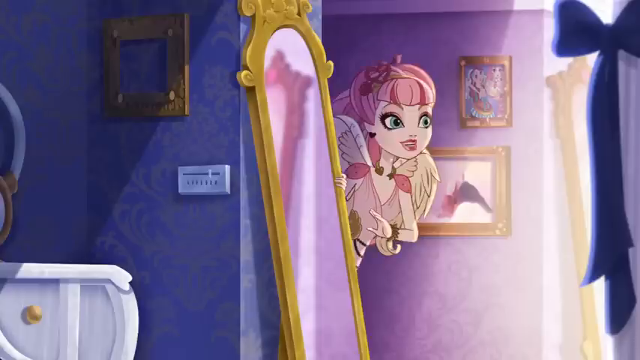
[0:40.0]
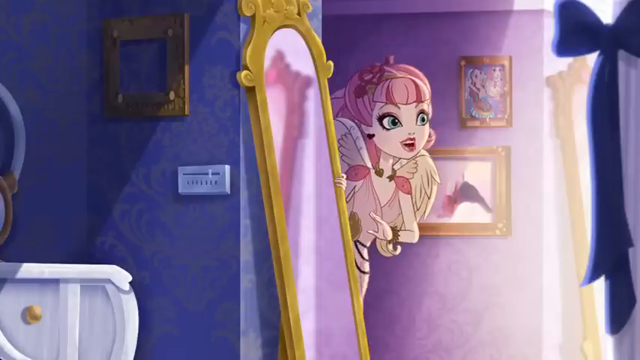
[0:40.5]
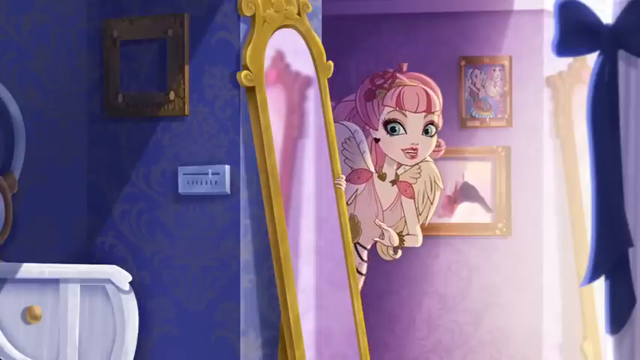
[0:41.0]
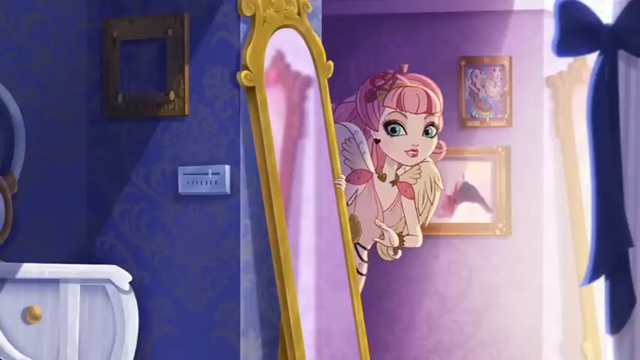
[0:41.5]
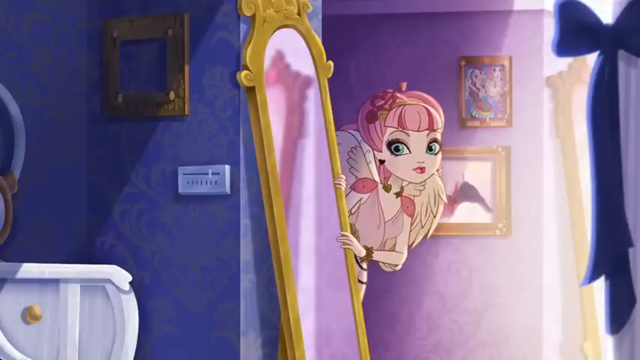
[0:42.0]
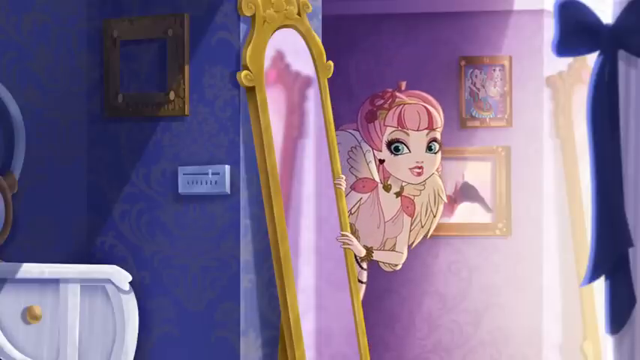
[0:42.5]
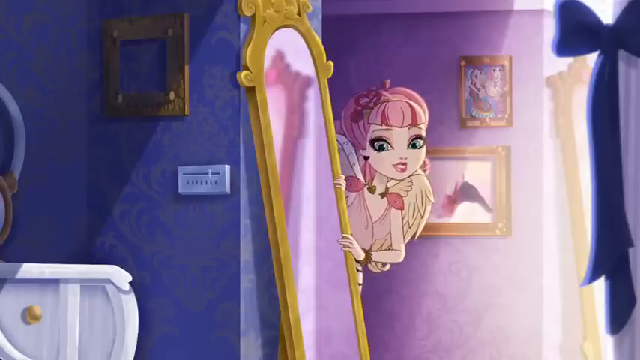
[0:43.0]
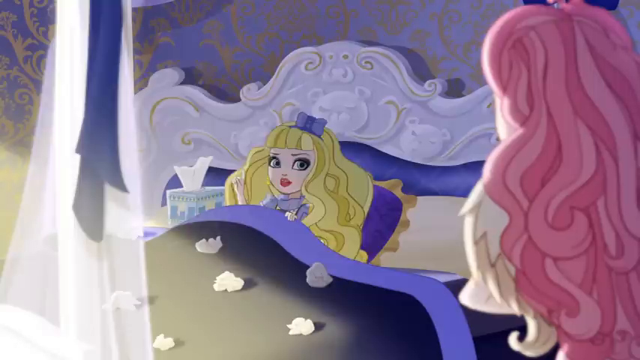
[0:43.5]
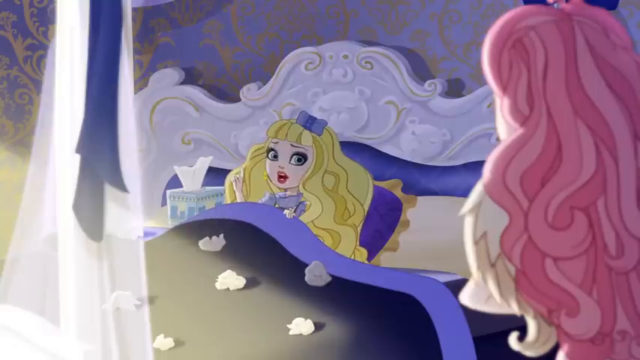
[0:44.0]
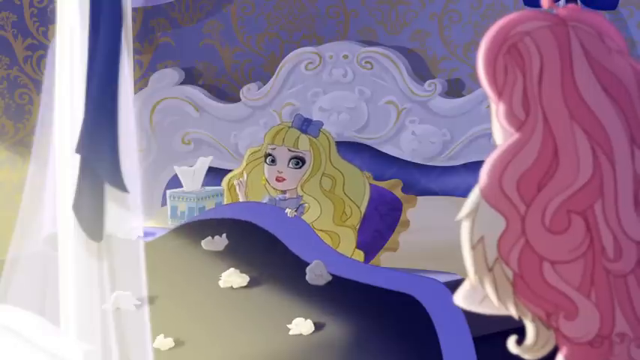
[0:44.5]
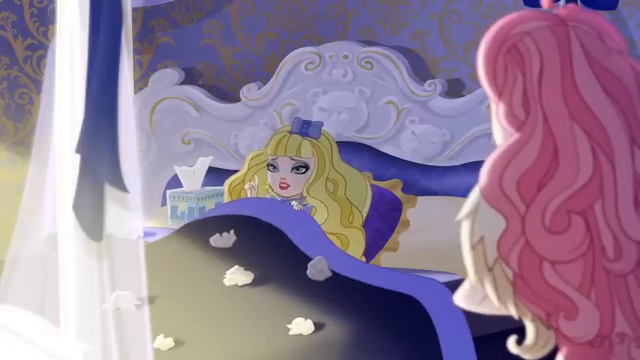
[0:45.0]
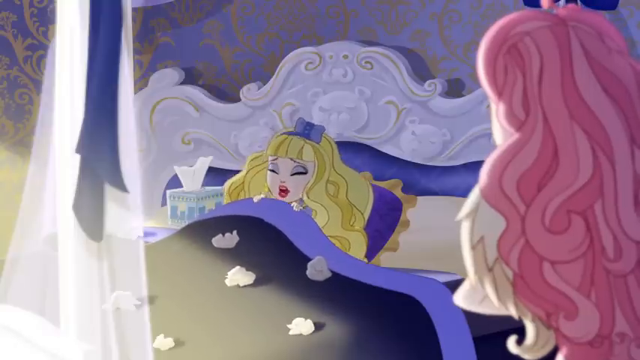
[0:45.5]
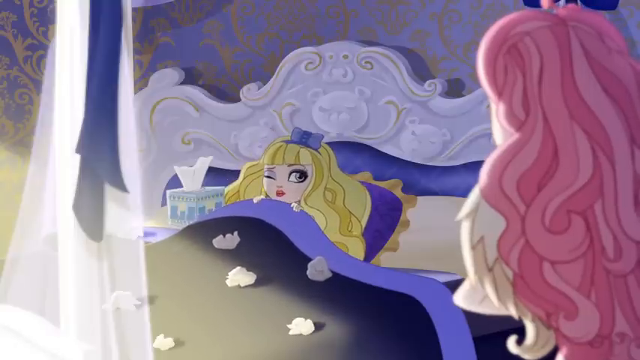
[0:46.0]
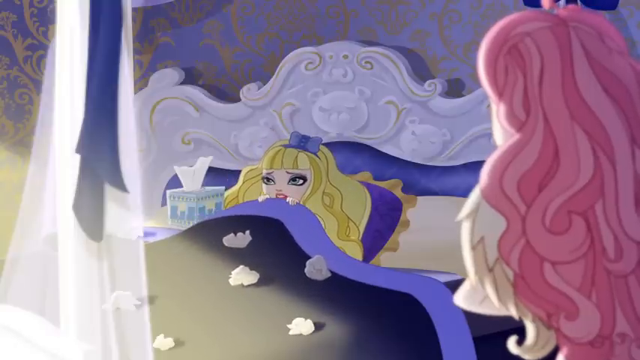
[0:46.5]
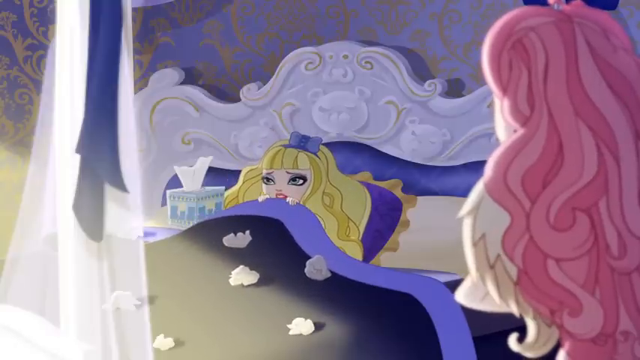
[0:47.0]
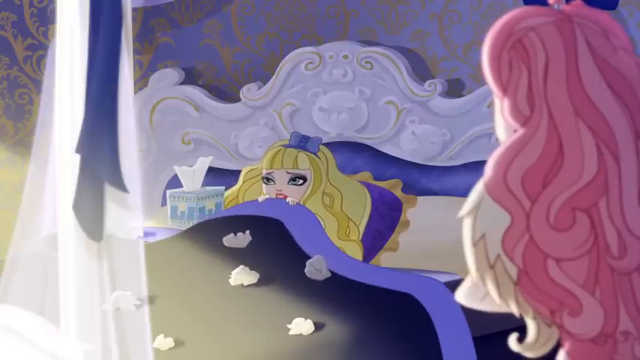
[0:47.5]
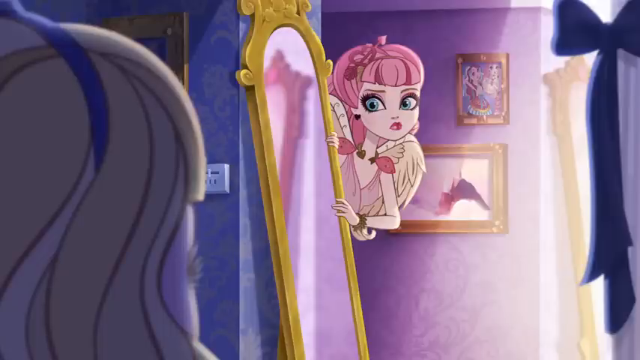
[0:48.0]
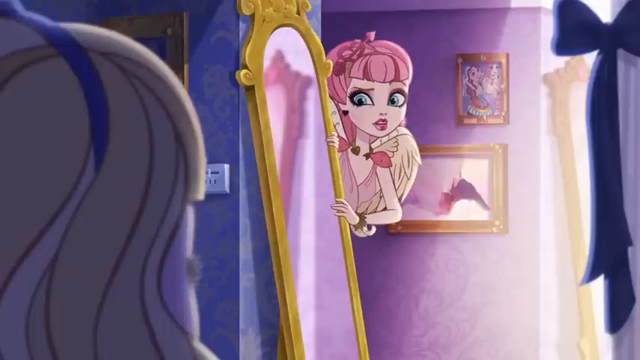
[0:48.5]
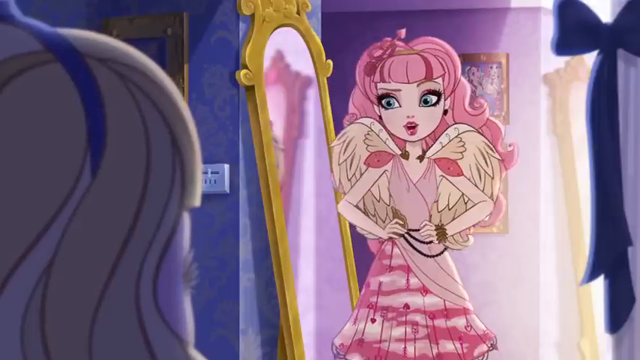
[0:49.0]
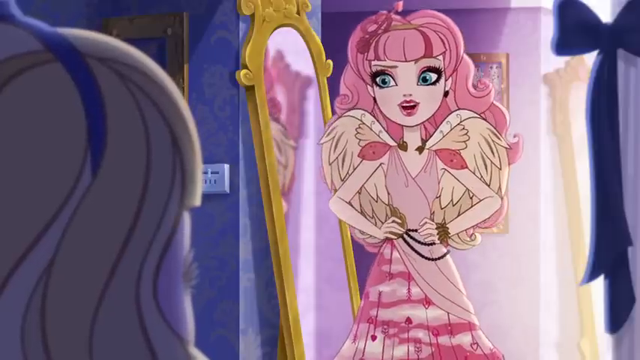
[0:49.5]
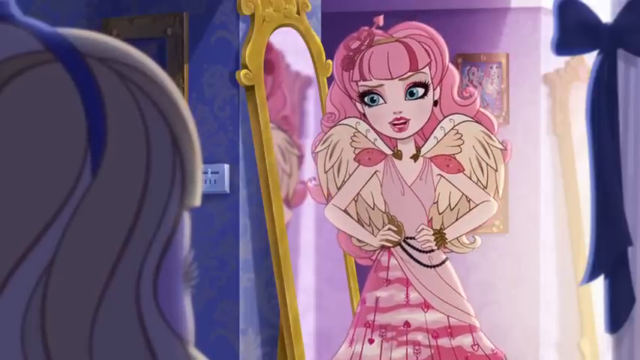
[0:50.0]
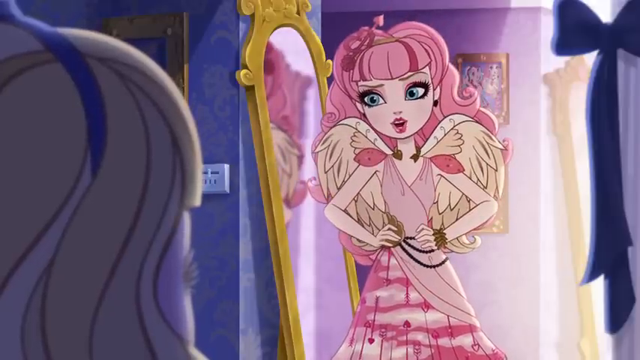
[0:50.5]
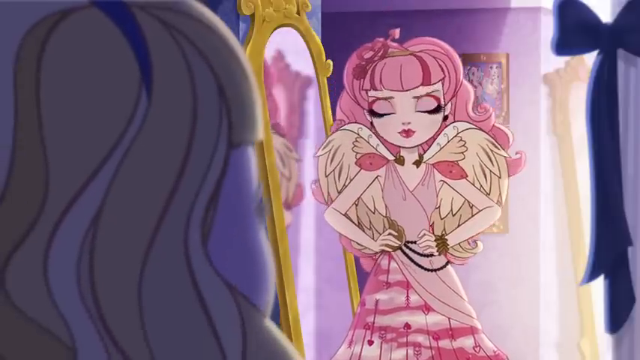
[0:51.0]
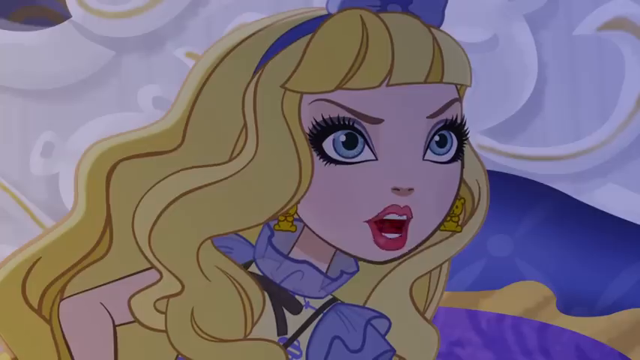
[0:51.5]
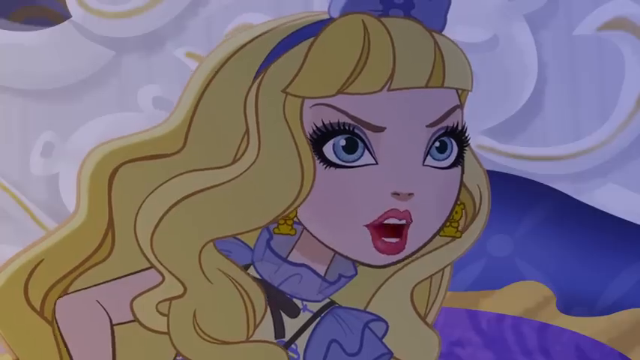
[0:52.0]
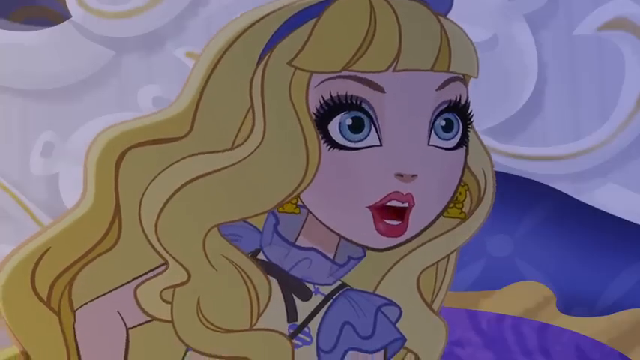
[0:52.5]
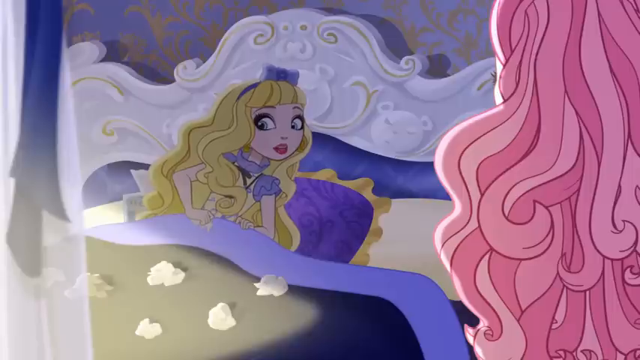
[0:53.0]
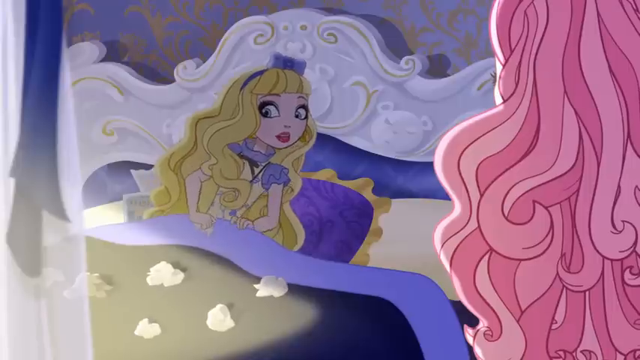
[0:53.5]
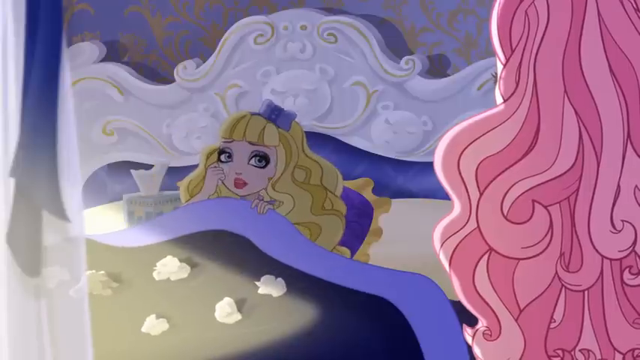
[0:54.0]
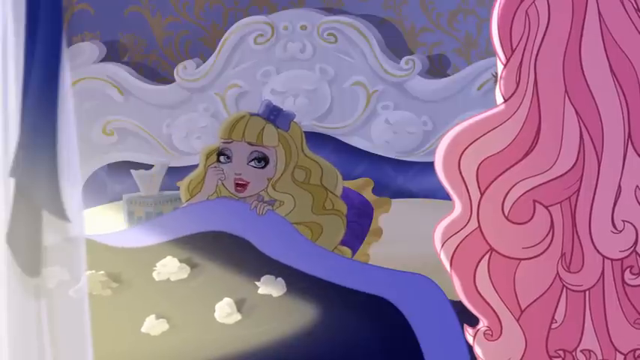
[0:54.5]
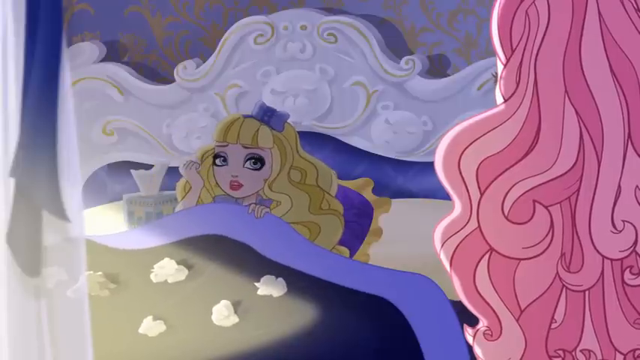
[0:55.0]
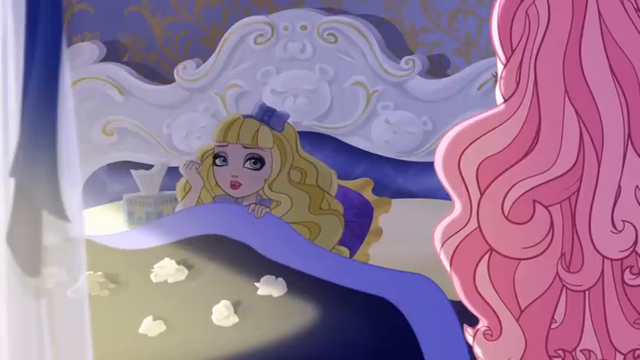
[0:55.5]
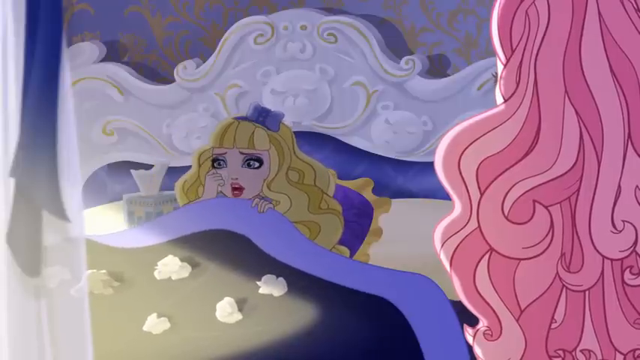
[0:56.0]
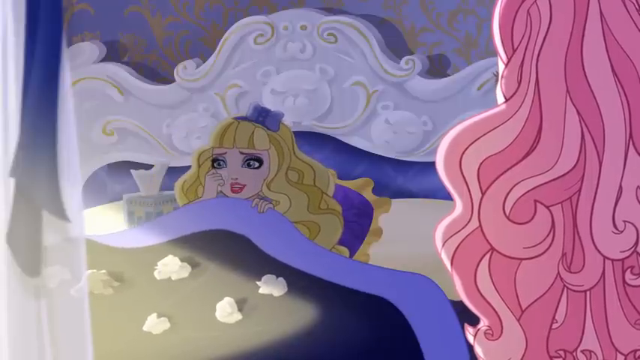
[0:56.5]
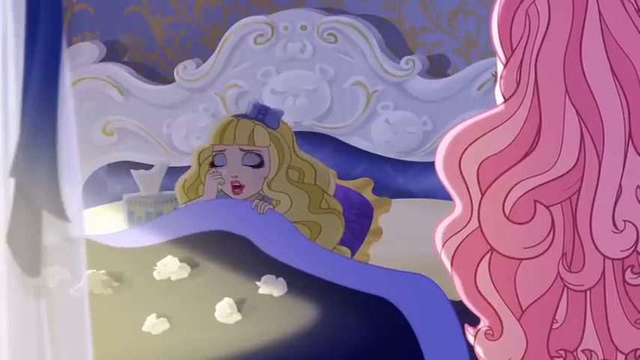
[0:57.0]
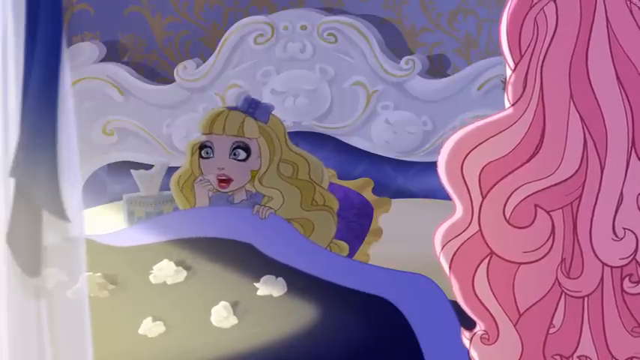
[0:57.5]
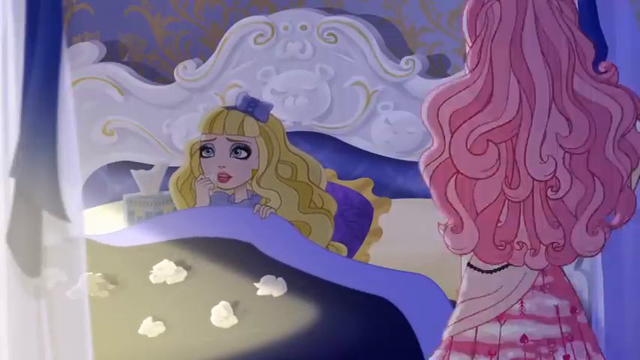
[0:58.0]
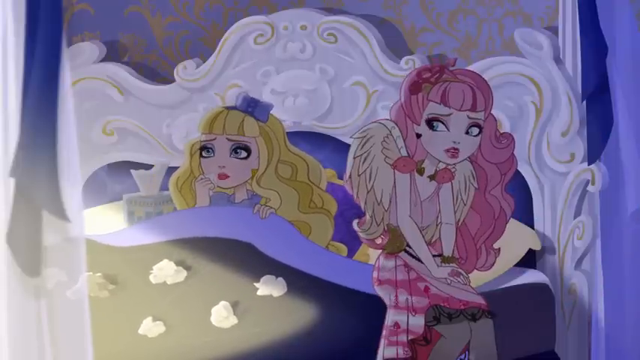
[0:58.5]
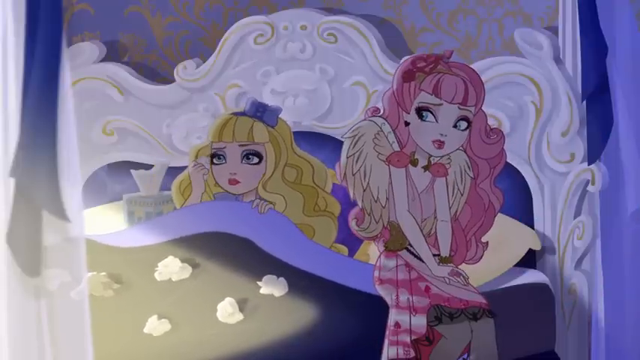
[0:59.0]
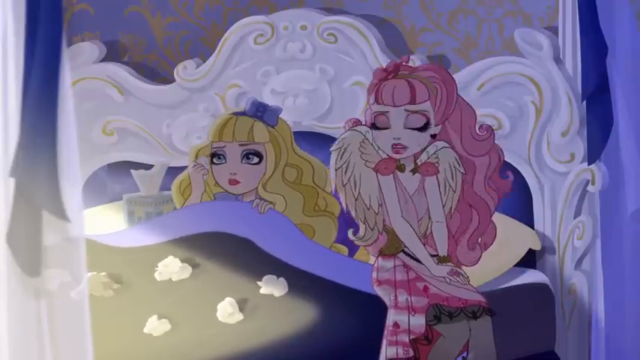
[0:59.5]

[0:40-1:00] A girl with wings and pink hair, her makeup all done, peeks around a corner that has a mirror leaned up against it, with a thermostat on the other side. Two pictures are on the wall behind her, and she seems to be trying to talk to somebody. The camera pans to a sad girl with blonde hair and makeup lying in bed, maybe even sick, who does not want to leave; she covers herself more. The pink-haired girl comes out from around the corner with her shoulders and elbows up, upset, trying to get her to come out of the bed. She then empathizes and sits on the side of the bed beside her.